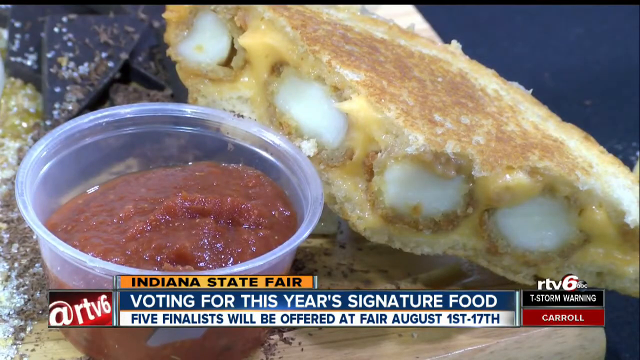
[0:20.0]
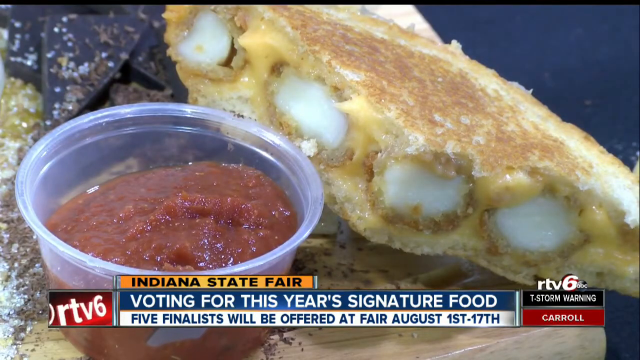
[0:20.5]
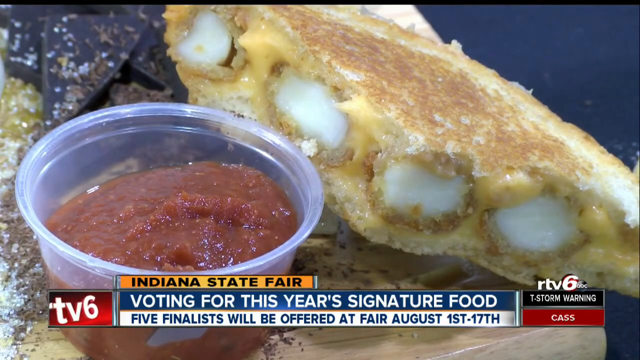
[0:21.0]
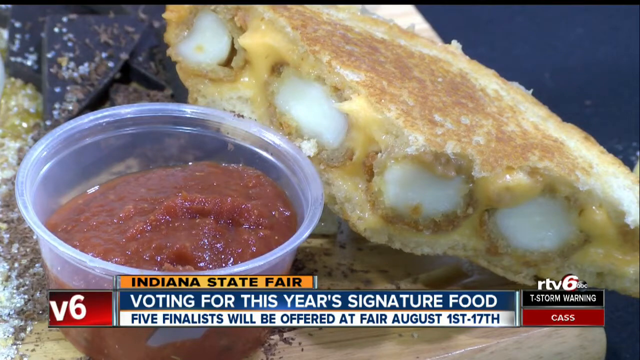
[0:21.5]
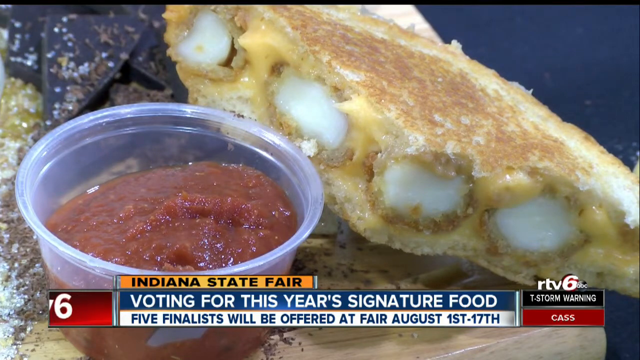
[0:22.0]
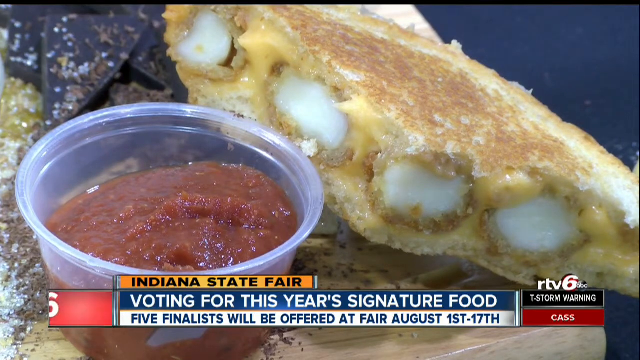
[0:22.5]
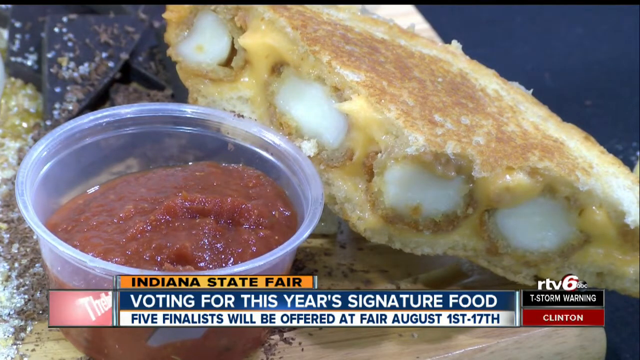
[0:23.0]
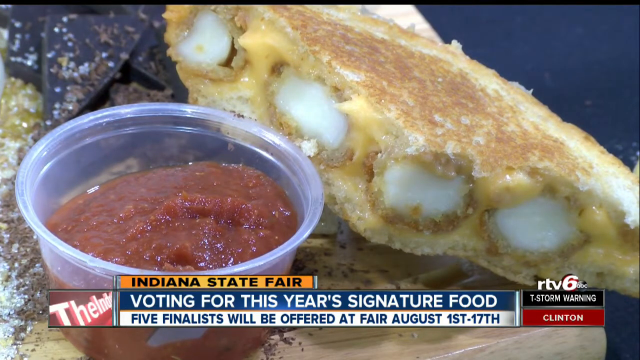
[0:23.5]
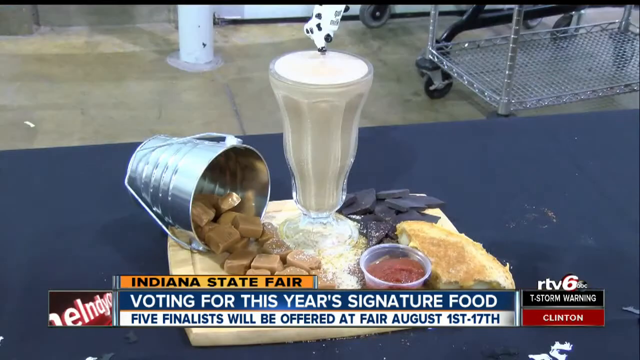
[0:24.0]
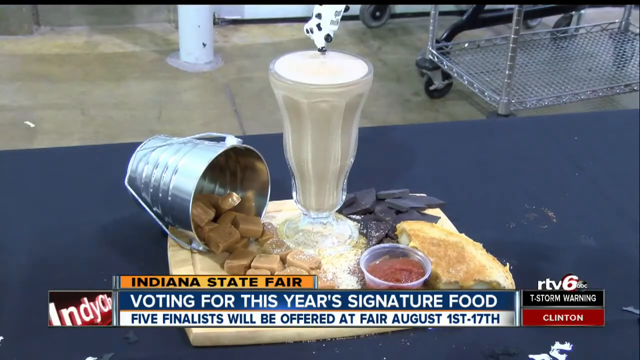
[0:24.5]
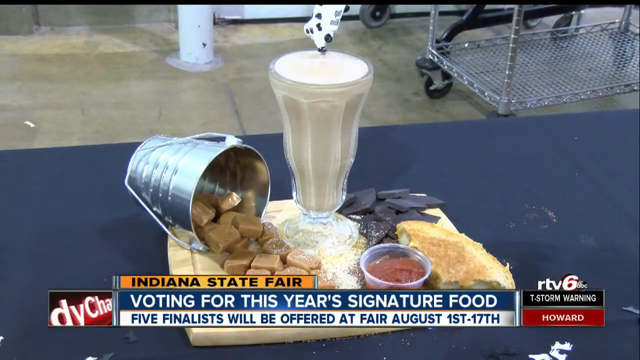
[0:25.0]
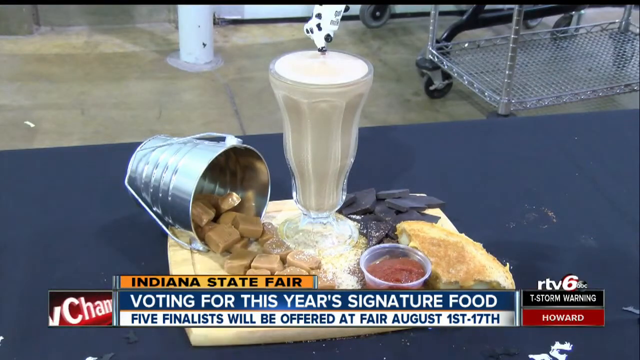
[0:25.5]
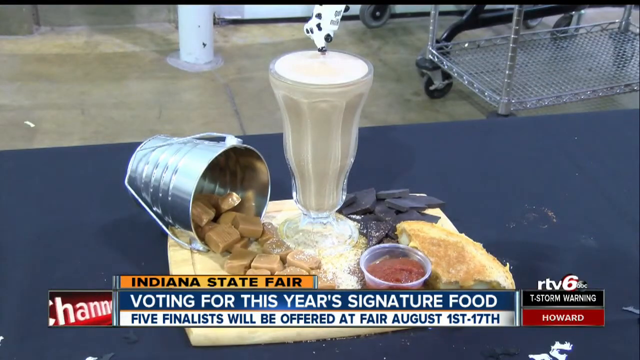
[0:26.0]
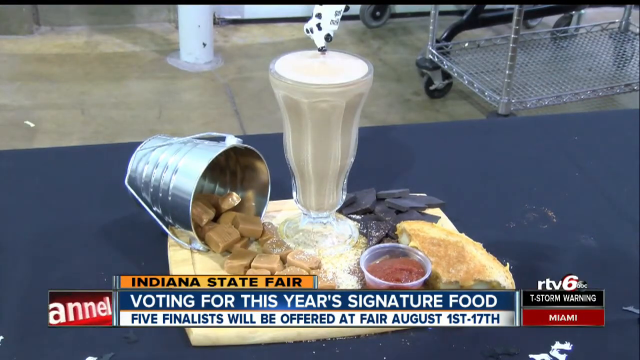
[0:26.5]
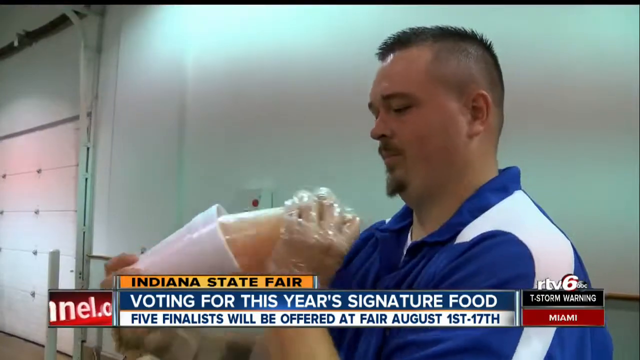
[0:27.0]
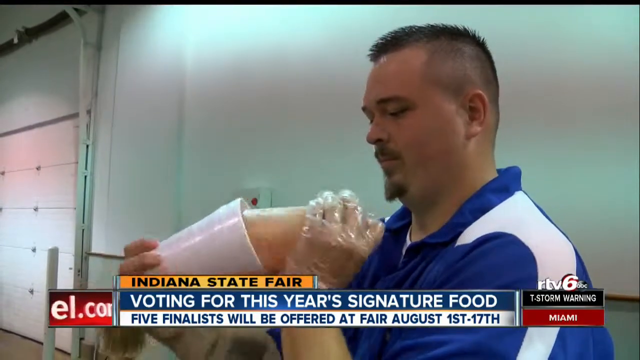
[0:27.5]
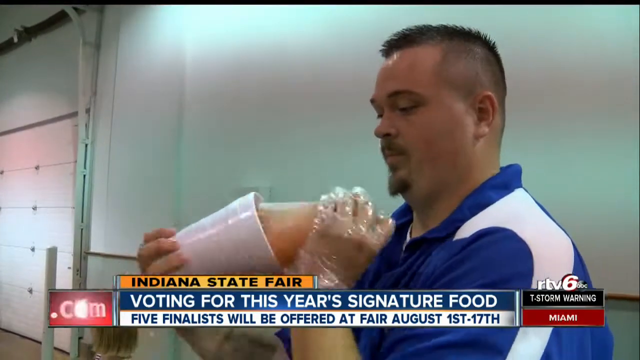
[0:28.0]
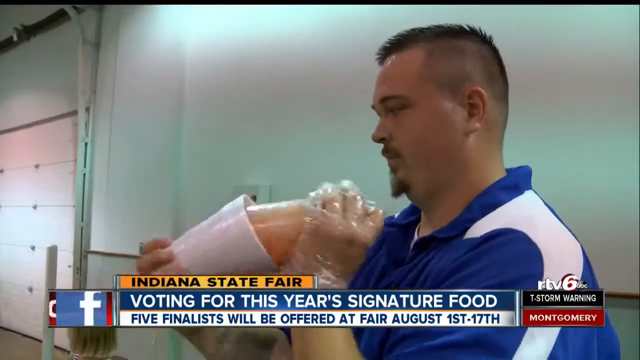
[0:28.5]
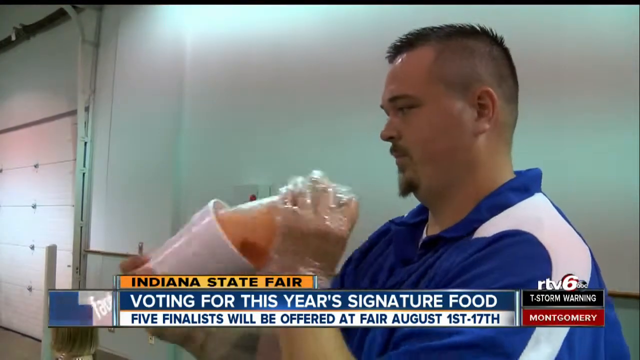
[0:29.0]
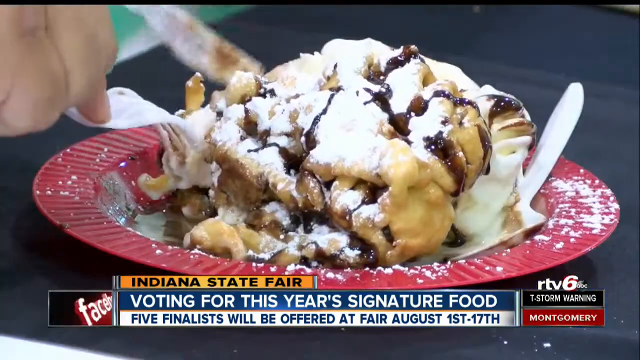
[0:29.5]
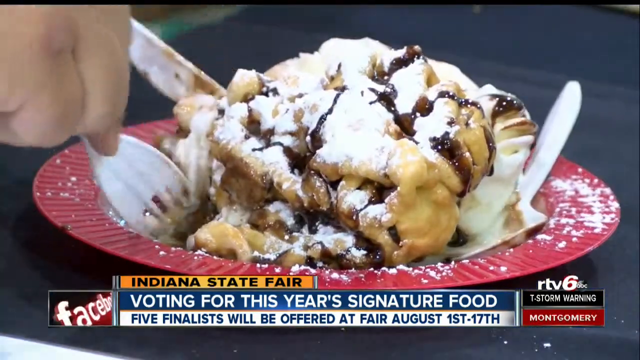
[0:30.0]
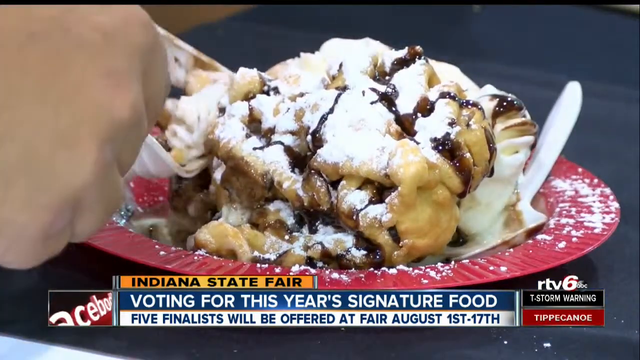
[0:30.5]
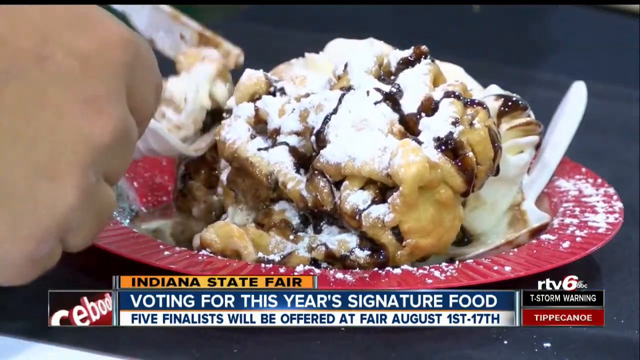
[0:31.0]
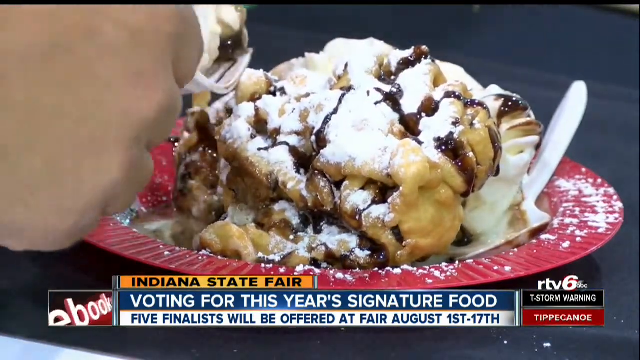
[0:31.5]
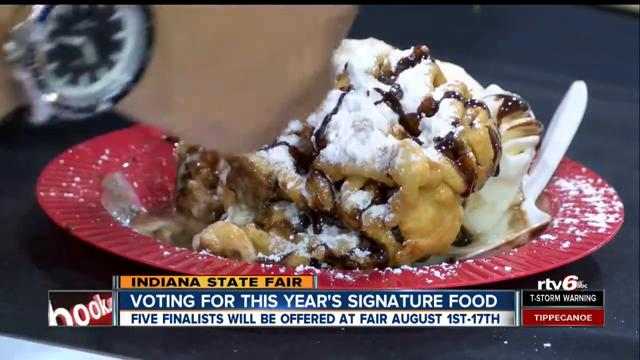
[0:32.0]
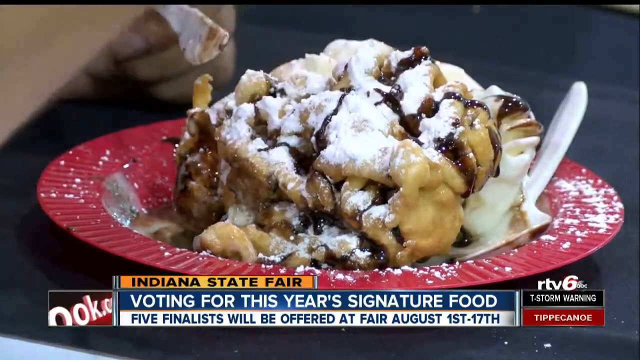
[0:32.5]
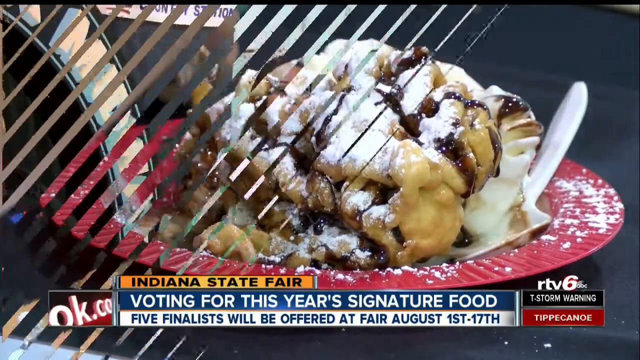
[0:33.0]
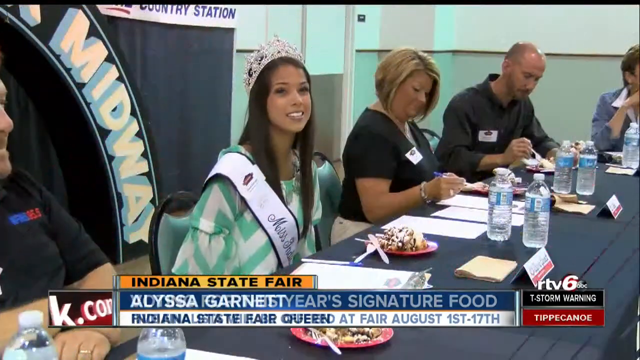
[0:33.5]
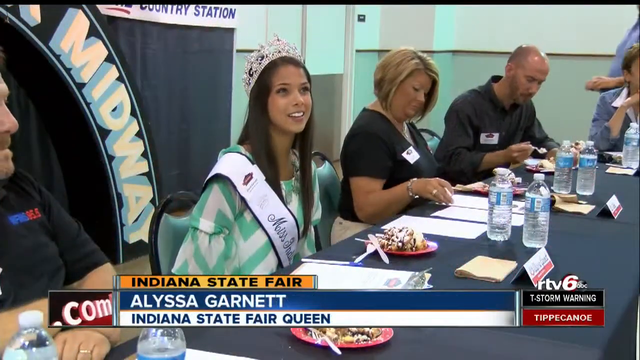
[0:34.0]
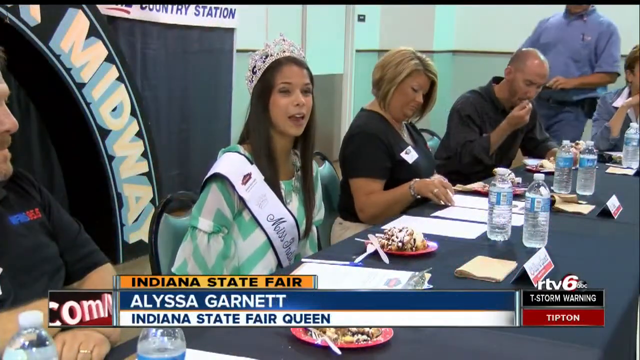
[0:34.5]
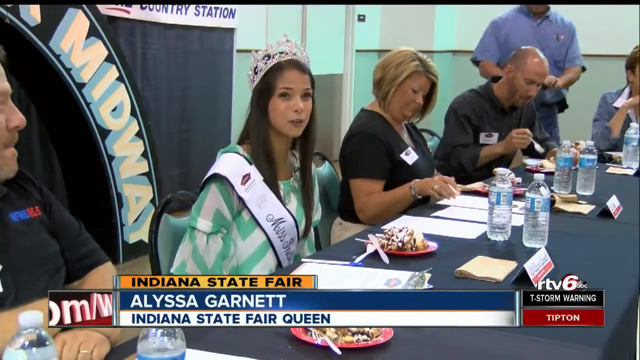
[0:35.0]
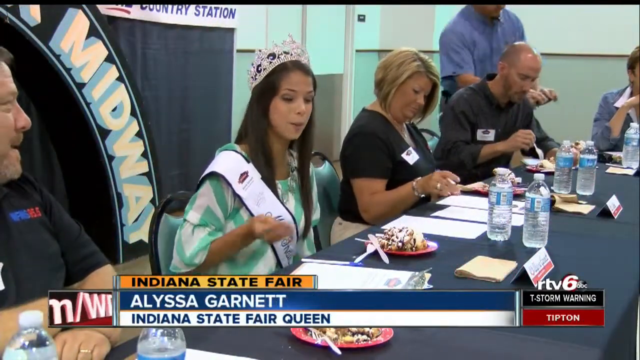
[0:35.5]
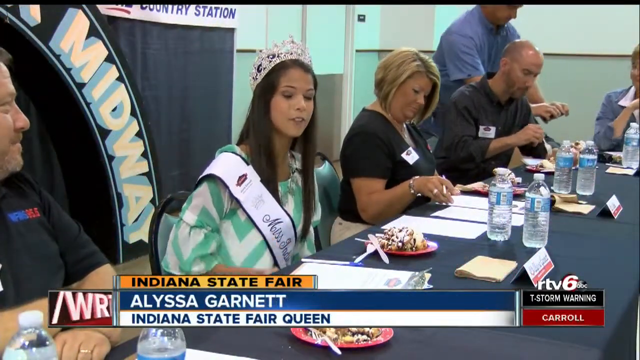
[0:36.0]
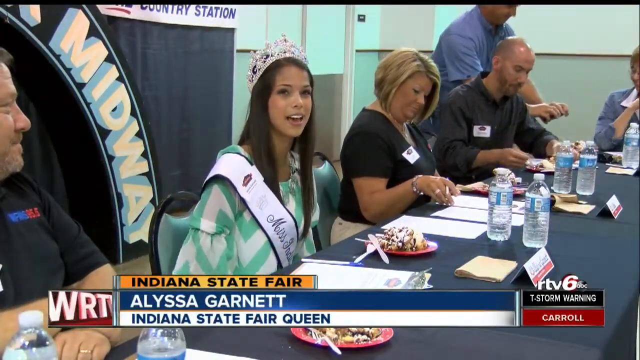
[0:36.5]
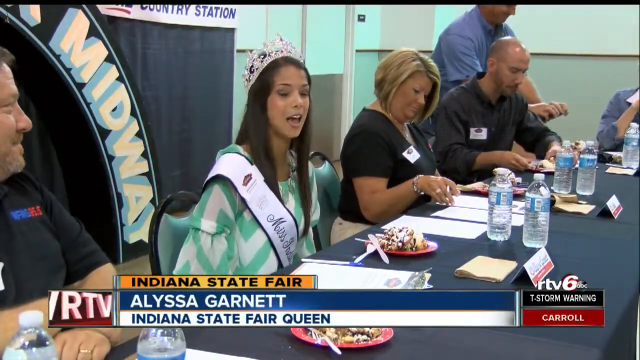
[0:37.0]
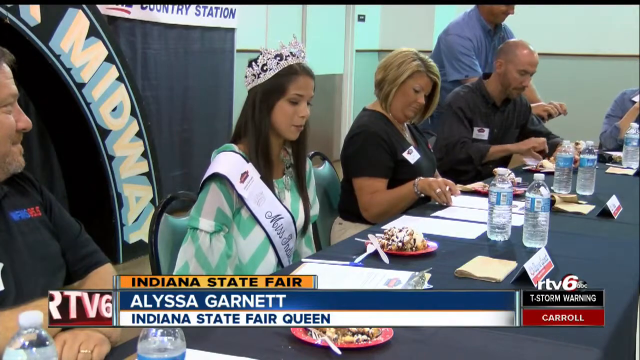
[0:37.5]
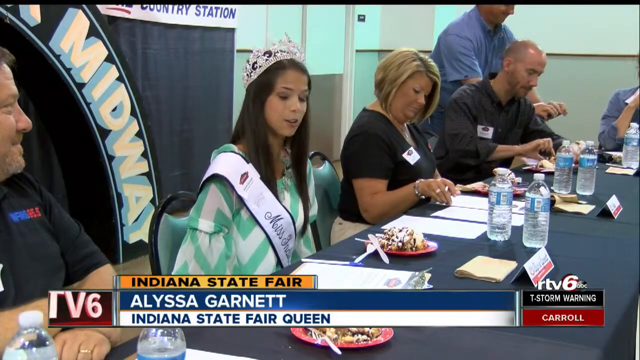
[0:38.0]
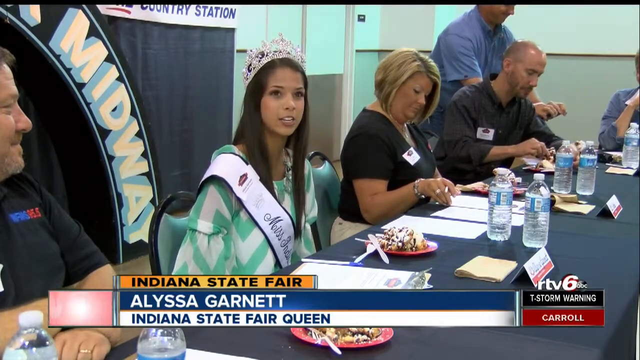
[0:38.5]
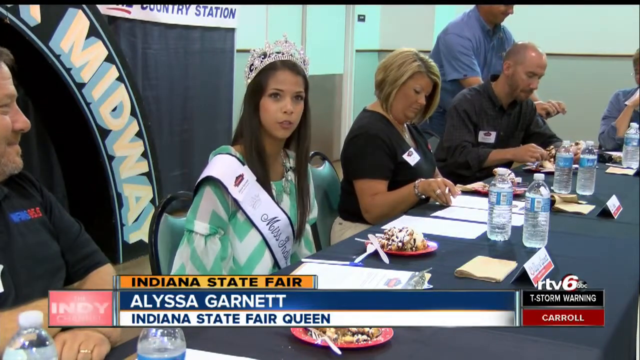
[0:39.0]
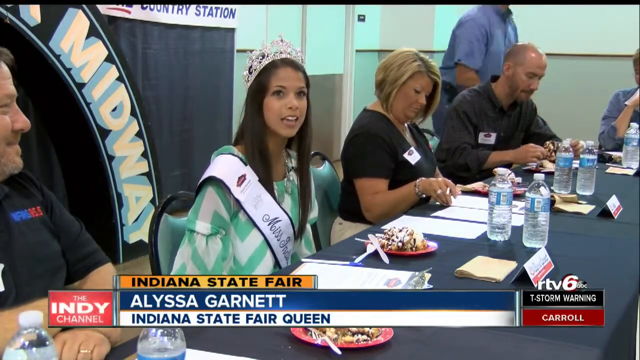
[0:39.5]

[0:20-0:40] The footage is shown on a news program, with on-screen text reading "Indiana State Fair voting for this year's signature food. Five finalists will be offered at fair August 1st to 17th." Segments show food ranging from desserts to main dishes. A judges' table follows. Miss Indiana, the State Fair Queen, is one of the judges; she wears her sash and crown and is all dressed up. Close-ups show the food, which comes with sauce, including what looks like a cheese sandwich and a milkshake. A man makes his milkshake in a garage, with the garage doors visible. A dessert is shown. The judges taste the food at a long table, each with a sample of the dishes presented. A man in a blue shirt takes pictures of the food. The Fair Queen, Alyssa Garnett, is interviewed at the table.